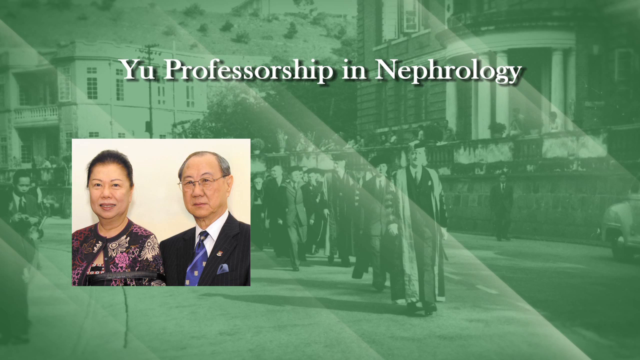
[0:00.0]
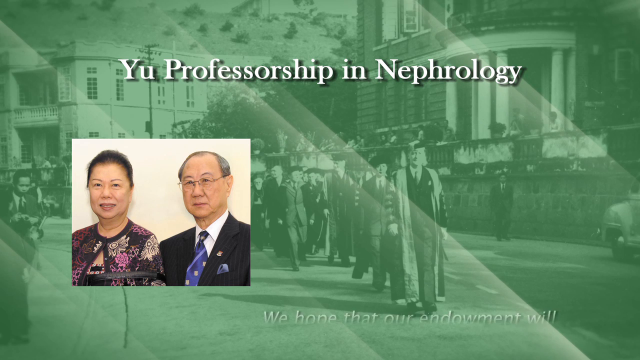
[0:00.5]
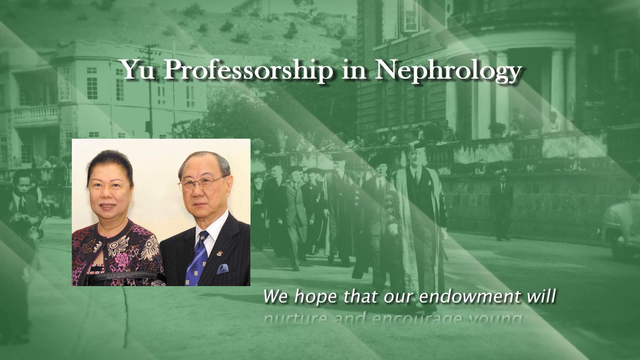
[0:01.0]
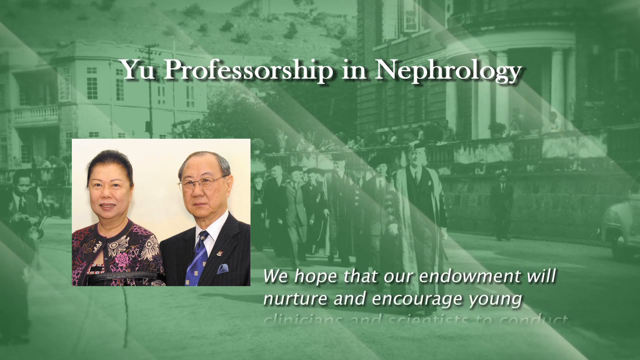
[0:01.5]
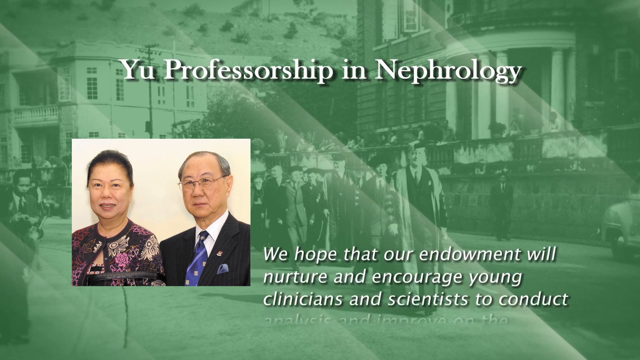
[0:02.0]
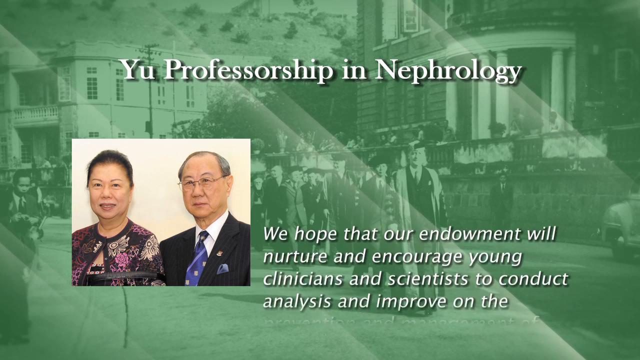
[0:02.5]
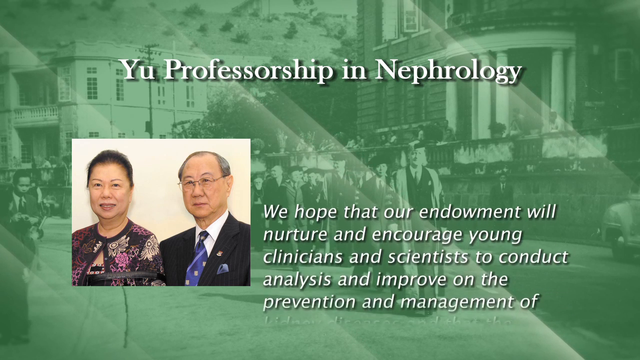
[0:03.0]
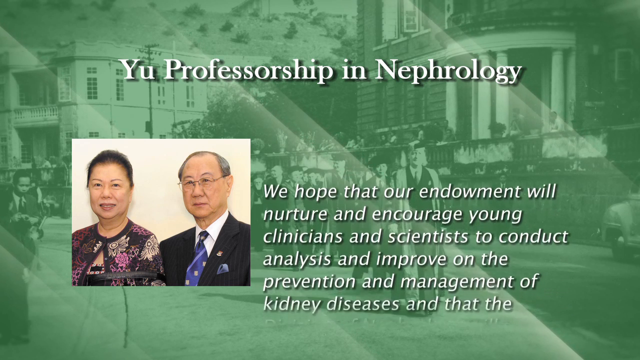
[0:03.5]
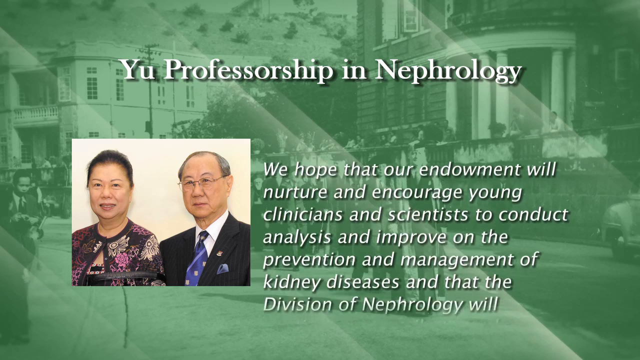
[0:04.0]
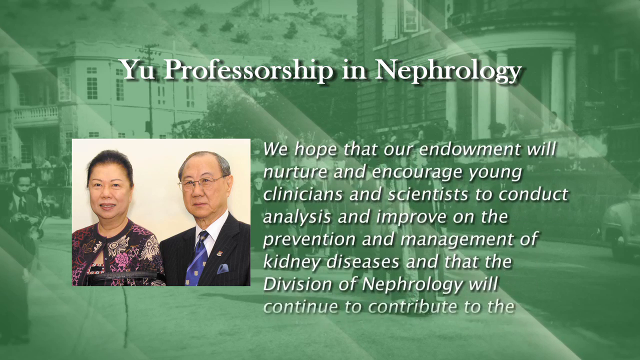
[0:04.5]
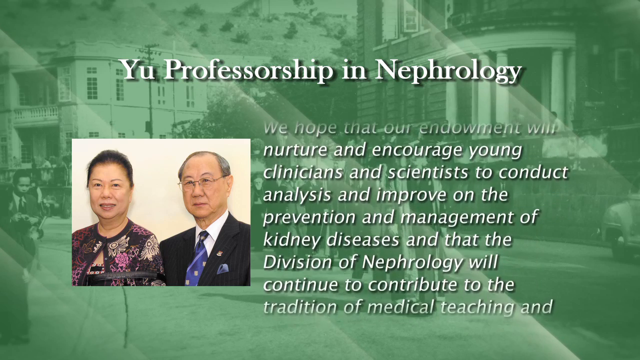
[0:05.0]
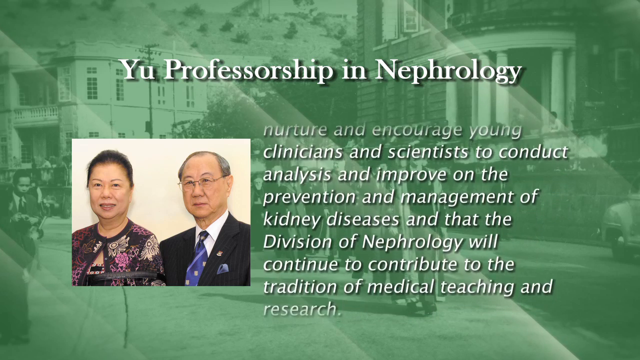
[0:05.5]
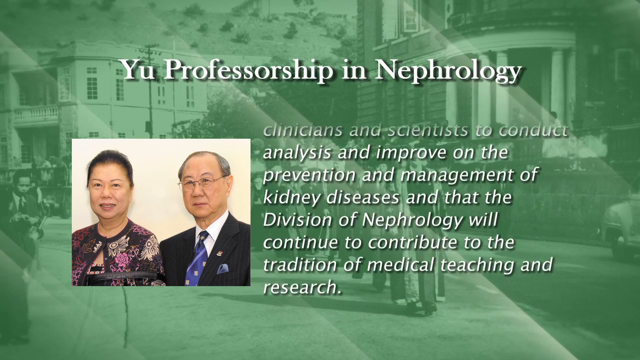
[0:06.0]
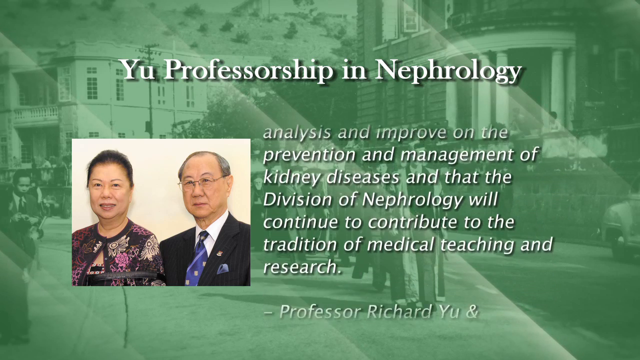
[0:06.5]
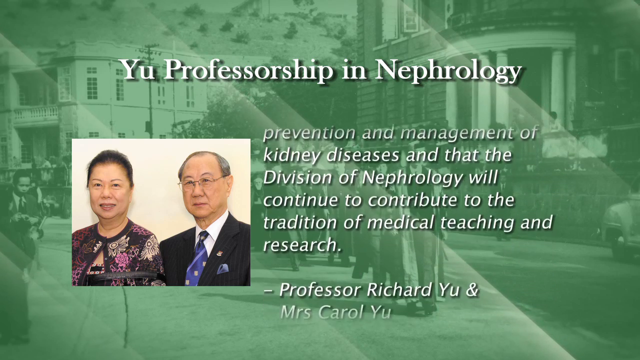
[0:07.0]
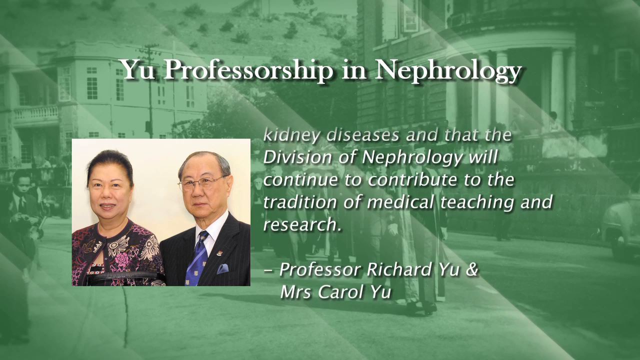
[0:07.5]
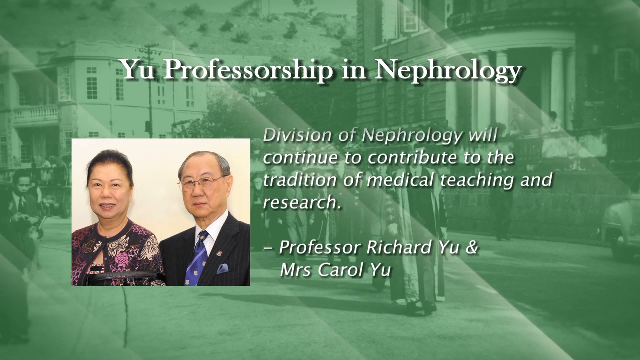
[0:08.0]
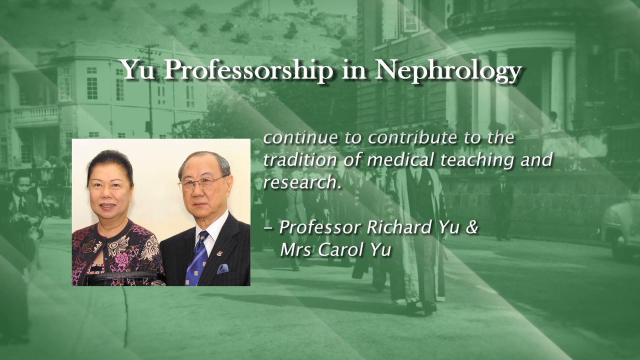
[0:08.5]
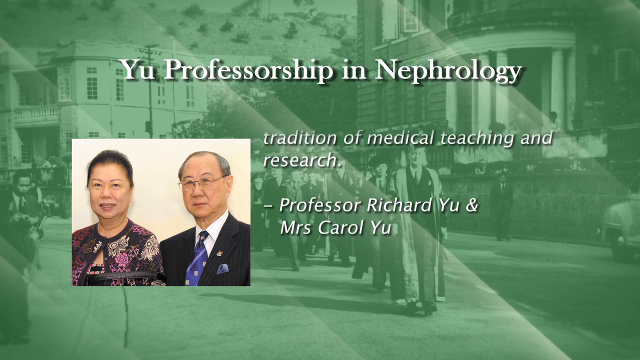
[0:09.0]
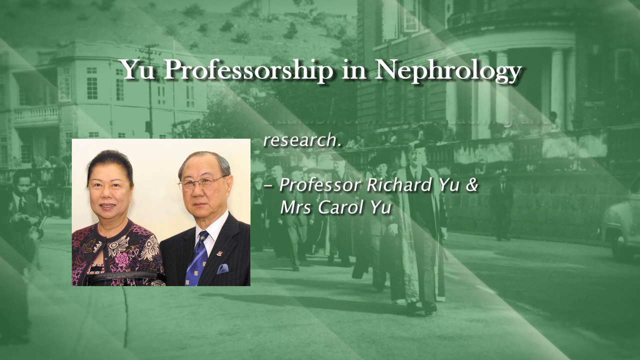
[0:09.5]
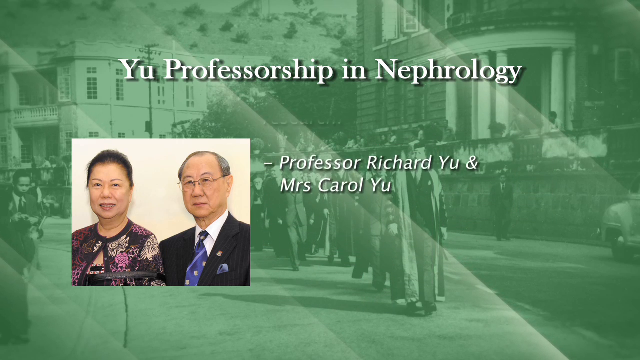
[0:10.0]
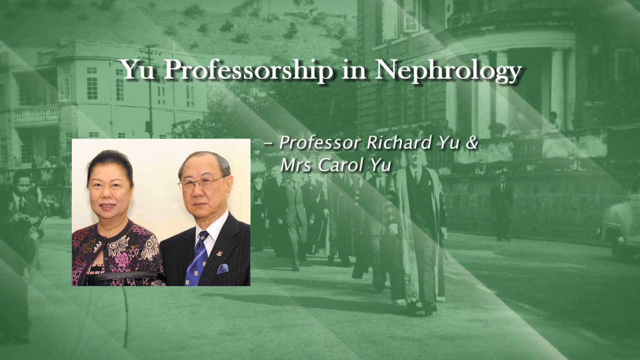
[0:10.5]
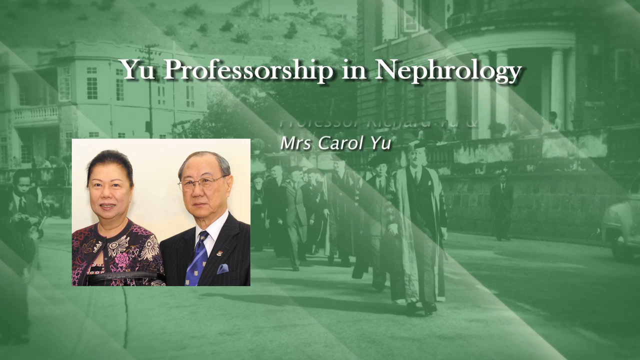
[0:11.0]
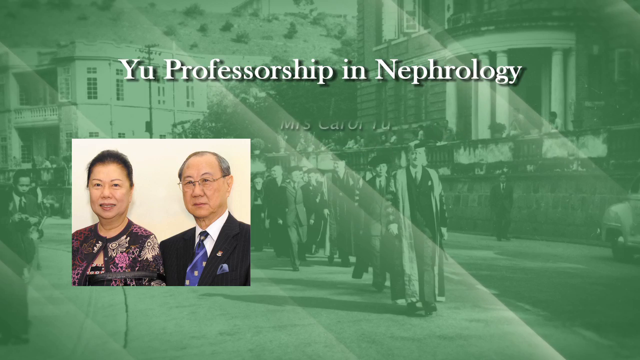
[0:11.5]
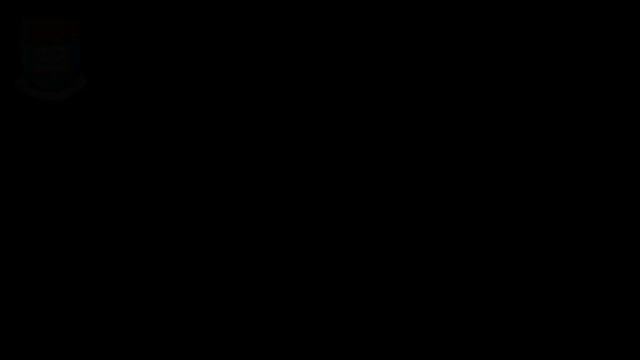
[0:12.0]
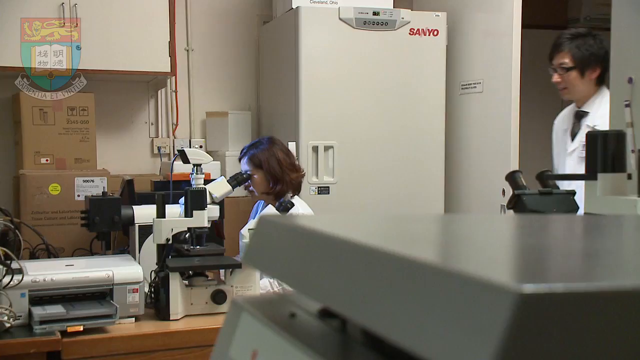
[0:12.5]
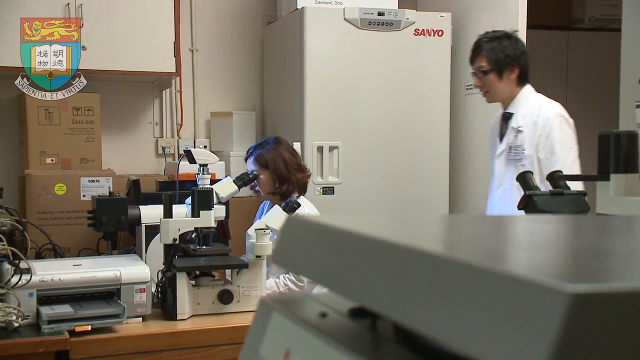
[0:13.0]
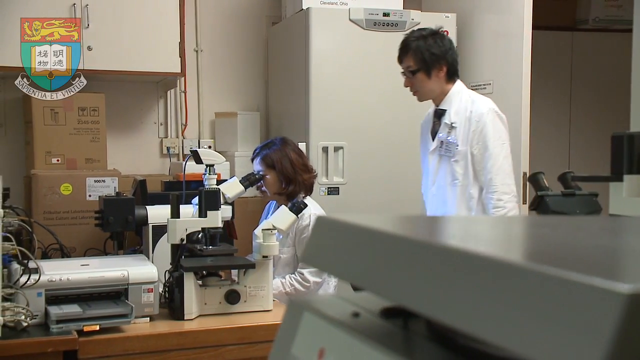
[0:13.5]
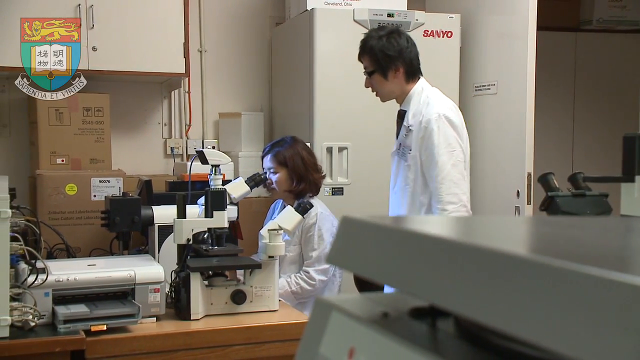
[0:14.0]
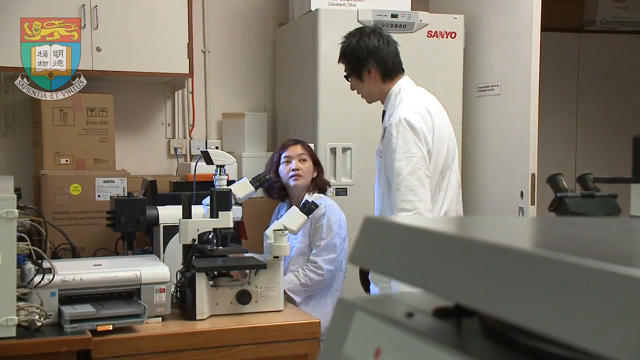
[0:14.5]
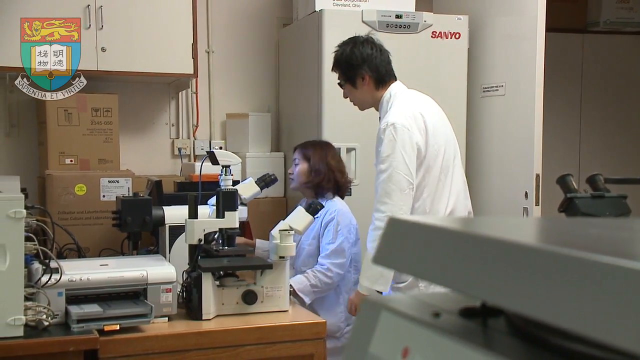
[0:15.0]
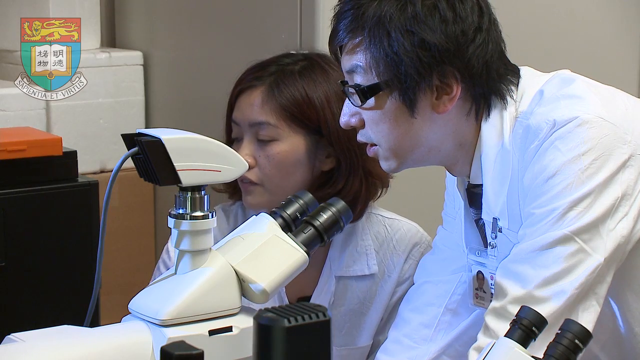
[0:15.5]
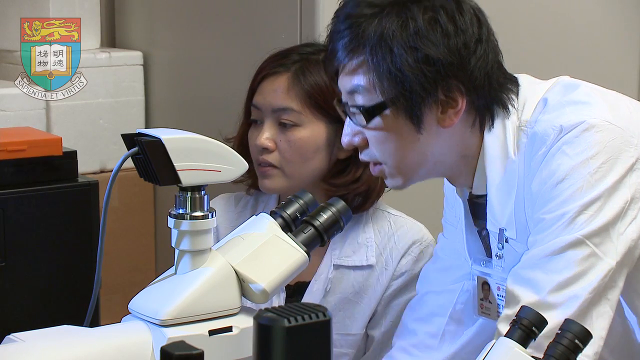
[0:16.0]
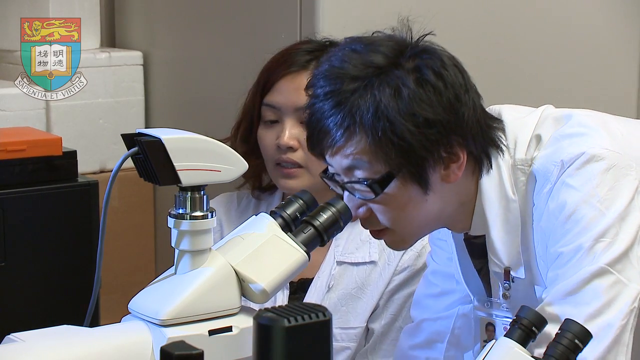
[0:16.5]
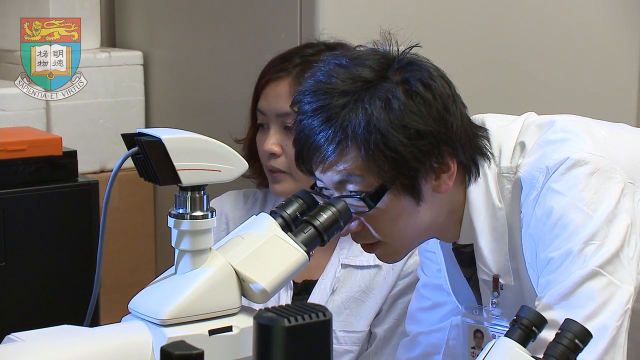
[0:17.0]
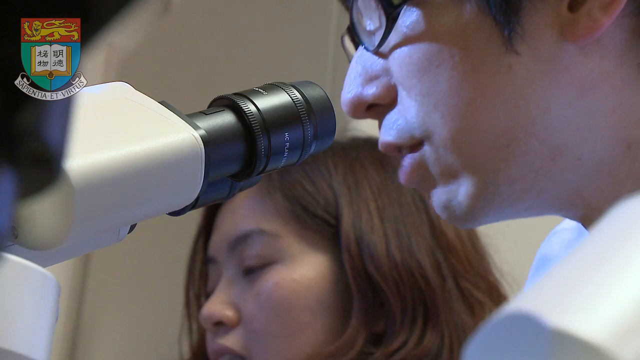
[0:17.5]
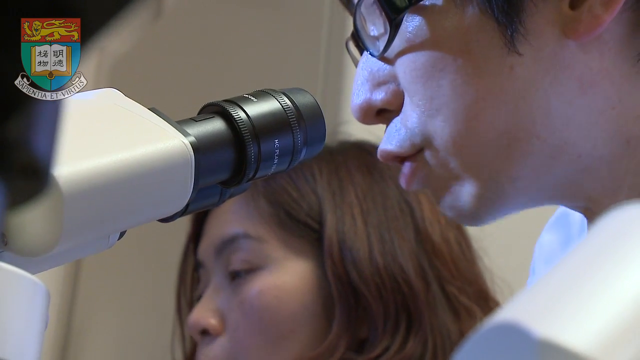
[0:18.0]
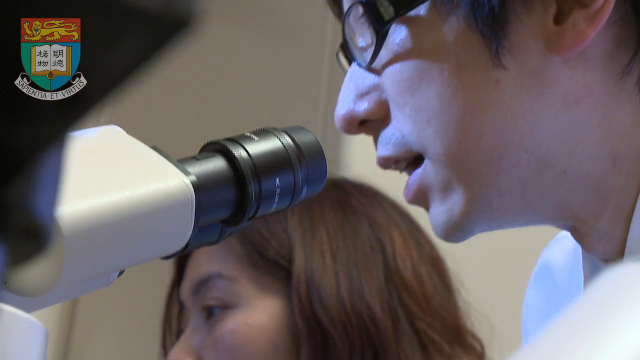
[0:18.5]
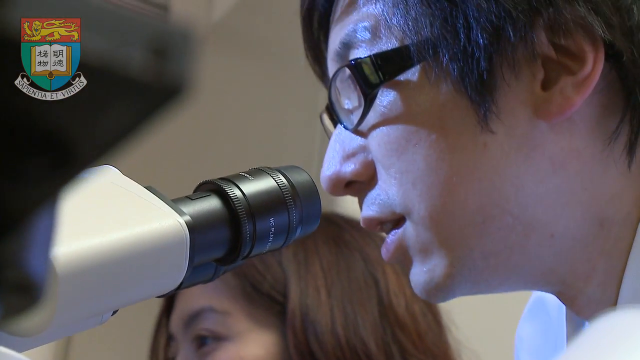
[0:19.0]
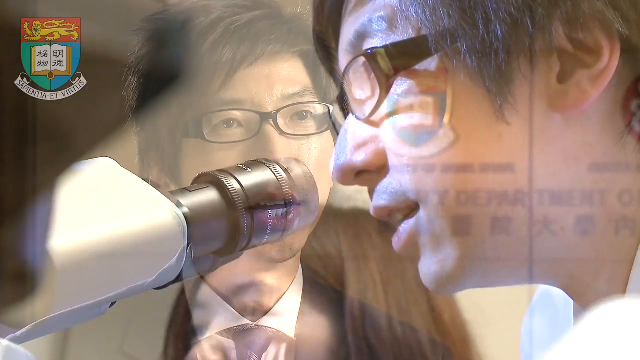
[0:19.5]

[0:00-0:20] The video seems to present information about the Yu professorship in nephrology. It opens with a photograph of a man and a woman, both seemingly of Asian descent and middle-aged, standing next to one another against a white background and looking into the camera. While the picture is on screen, a quote from the two, presumably Professor Richard Yu and Mrs. Carol Yu, goes up the right side of the image; it speaks of their hopes for their endowment and their desire for clinicians to continue managing kidney diseases and to contribute to teaching and research. The scene then changes to a laboratory, where a young woman sits at a microscope and a young man comes in to observe with her. Both seem to be wearing lab coats and are observing something on the microscope. The man speaks to the woman, presumably about what they are looking at.